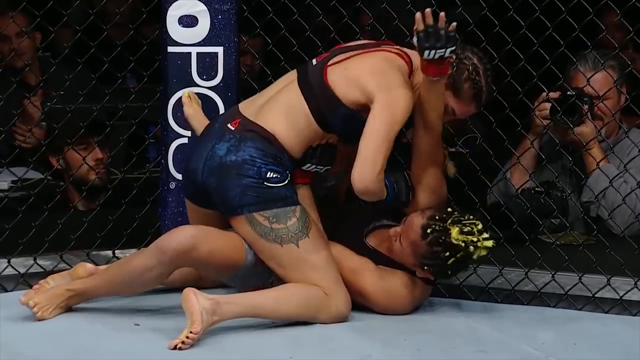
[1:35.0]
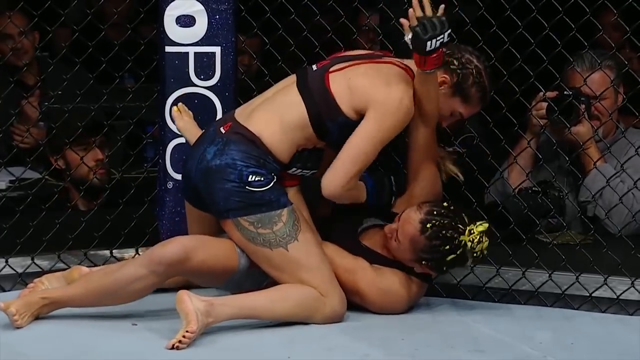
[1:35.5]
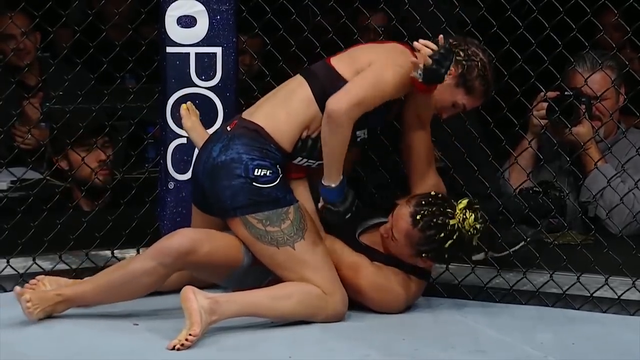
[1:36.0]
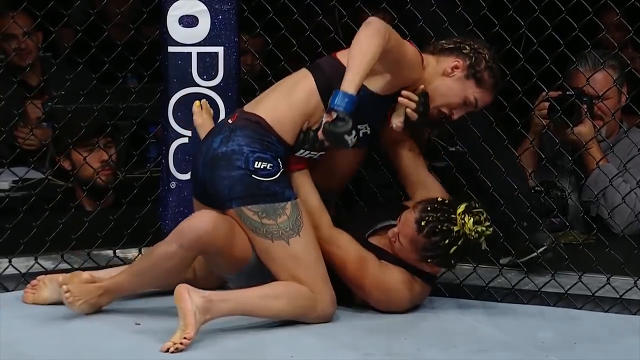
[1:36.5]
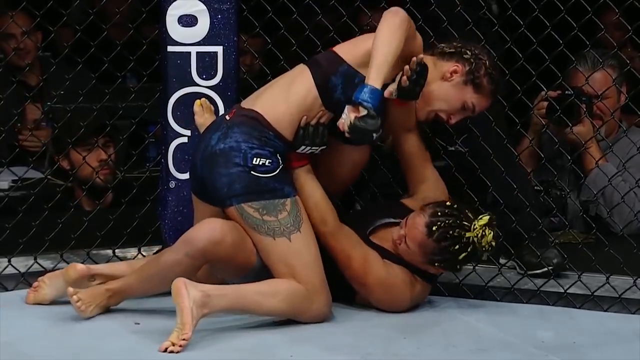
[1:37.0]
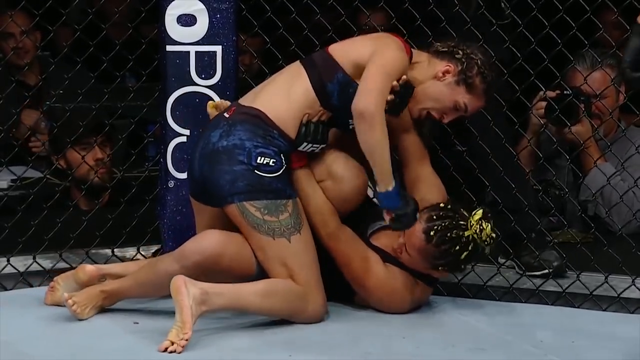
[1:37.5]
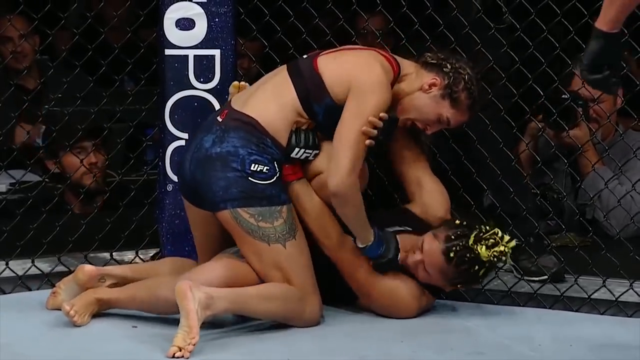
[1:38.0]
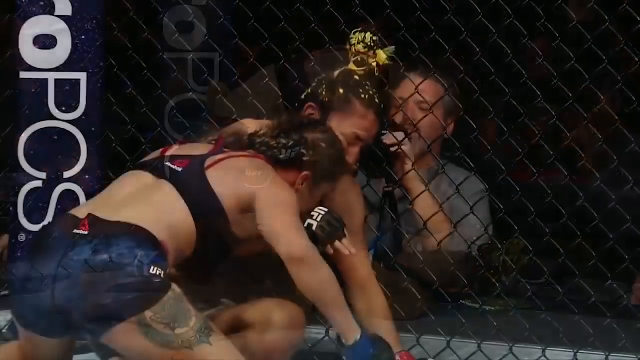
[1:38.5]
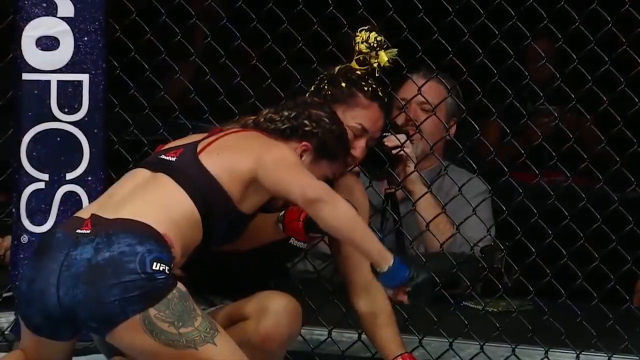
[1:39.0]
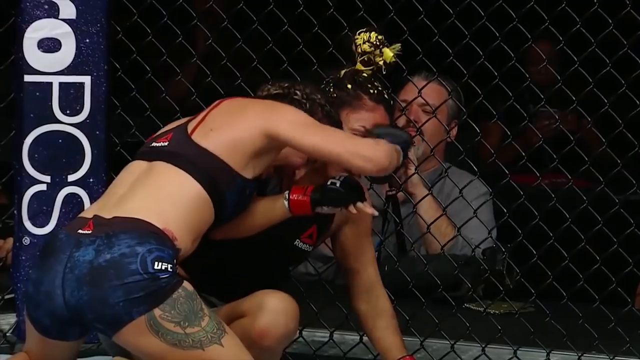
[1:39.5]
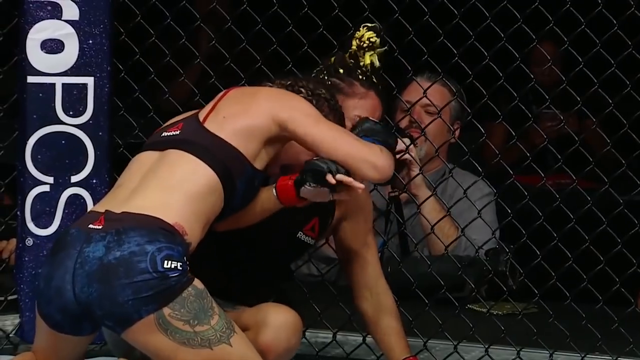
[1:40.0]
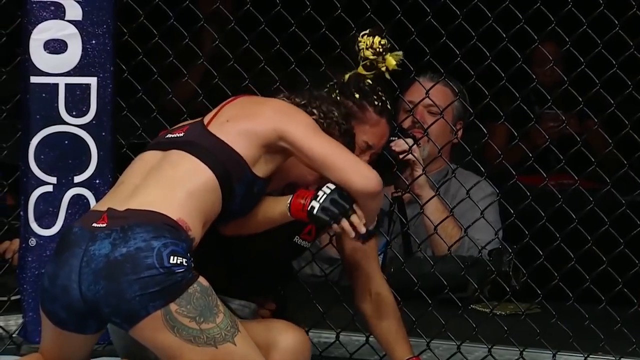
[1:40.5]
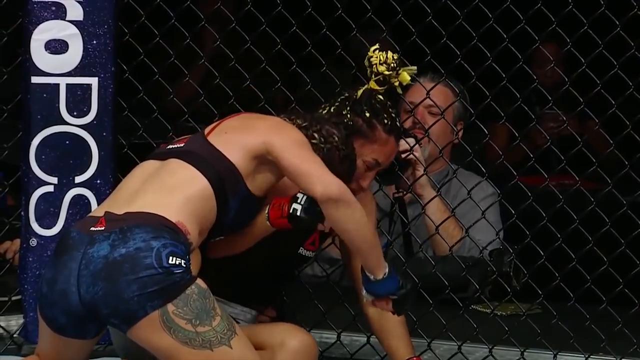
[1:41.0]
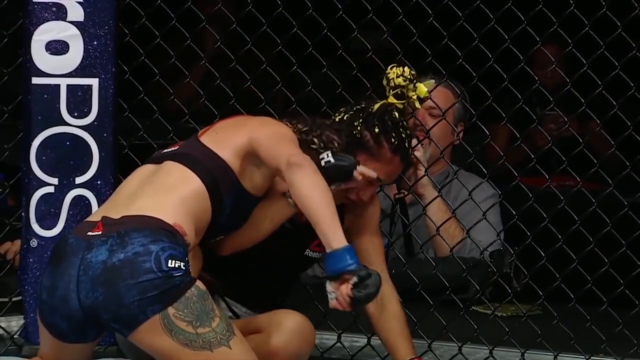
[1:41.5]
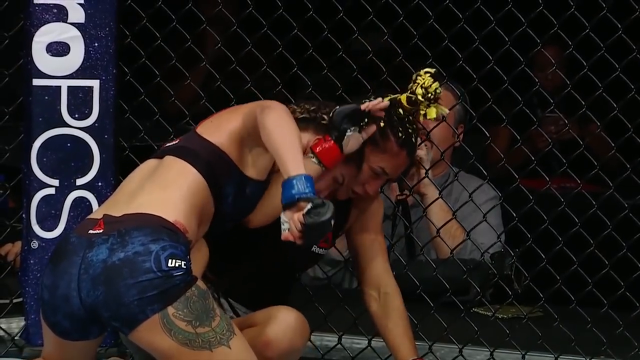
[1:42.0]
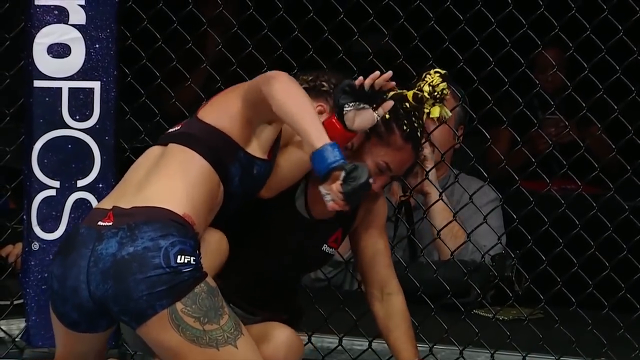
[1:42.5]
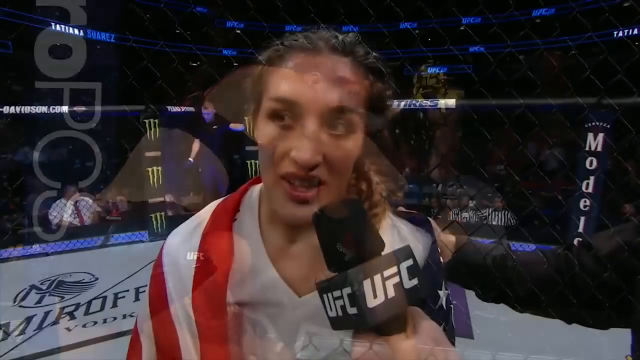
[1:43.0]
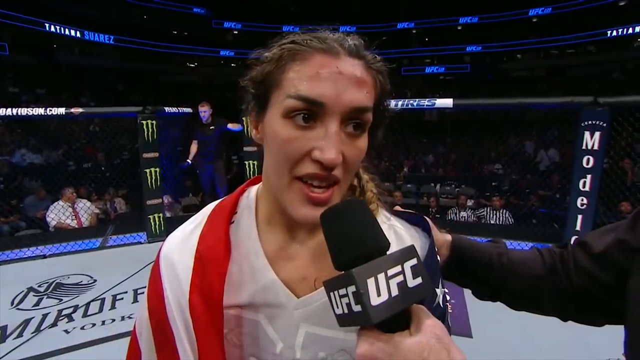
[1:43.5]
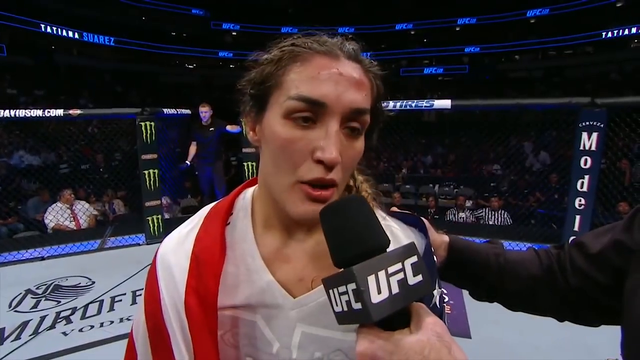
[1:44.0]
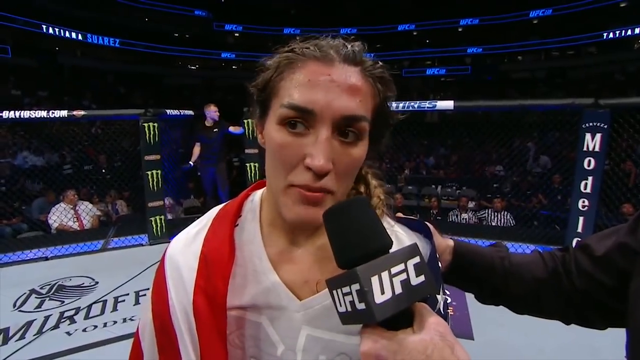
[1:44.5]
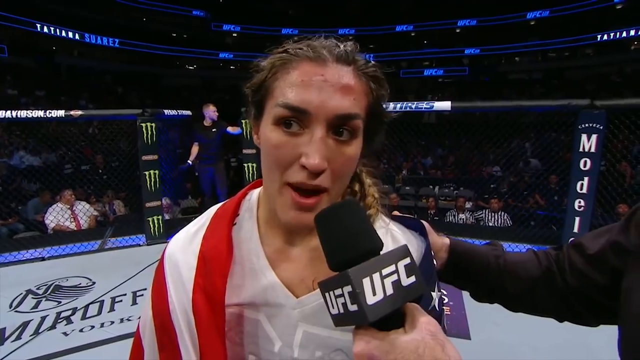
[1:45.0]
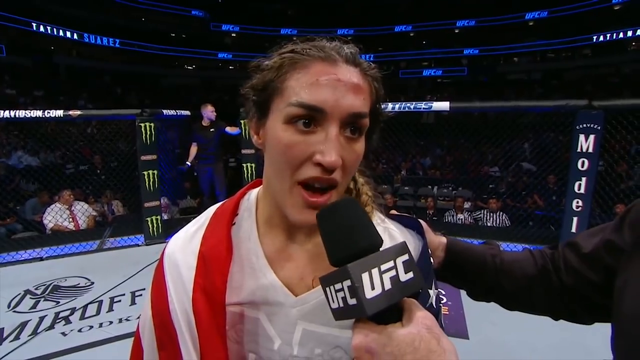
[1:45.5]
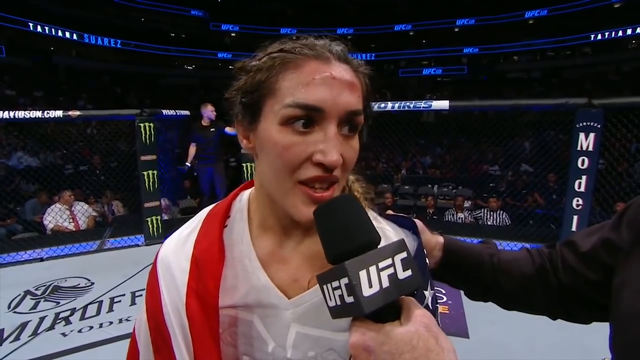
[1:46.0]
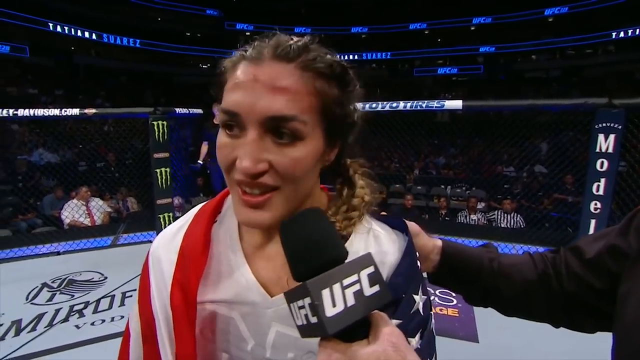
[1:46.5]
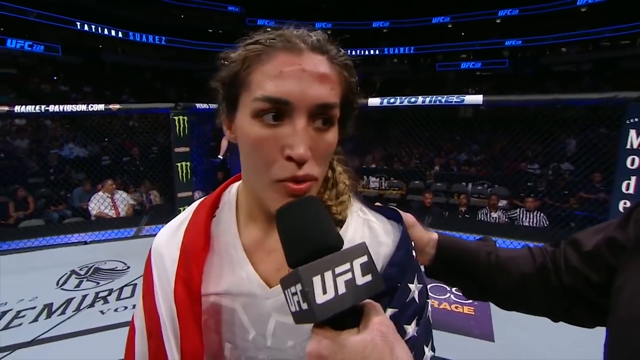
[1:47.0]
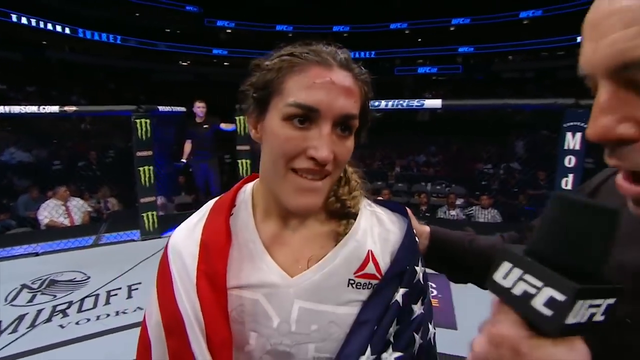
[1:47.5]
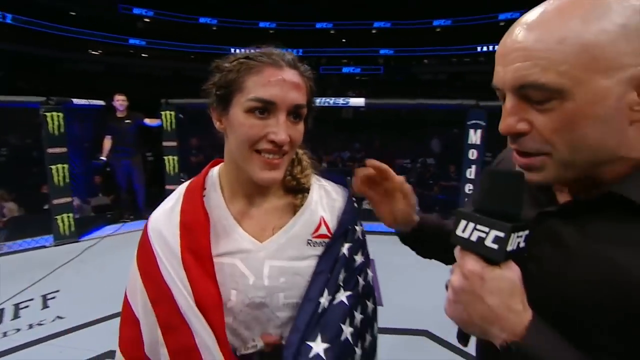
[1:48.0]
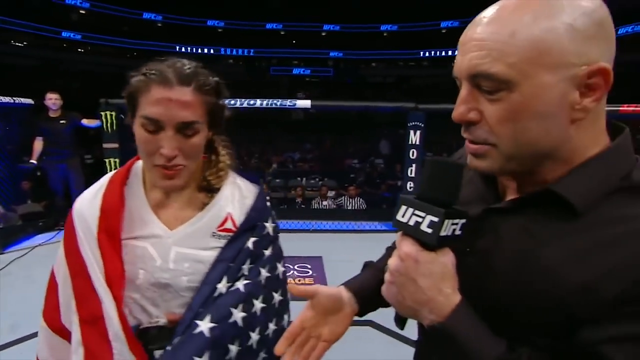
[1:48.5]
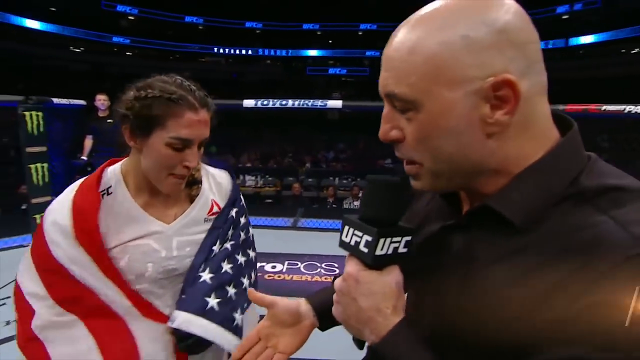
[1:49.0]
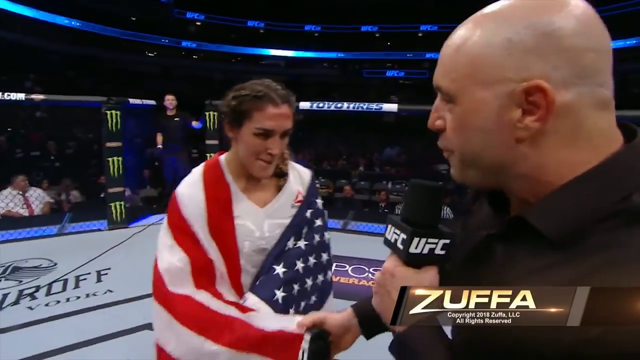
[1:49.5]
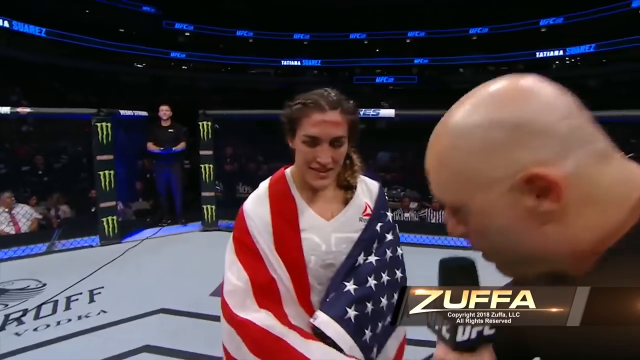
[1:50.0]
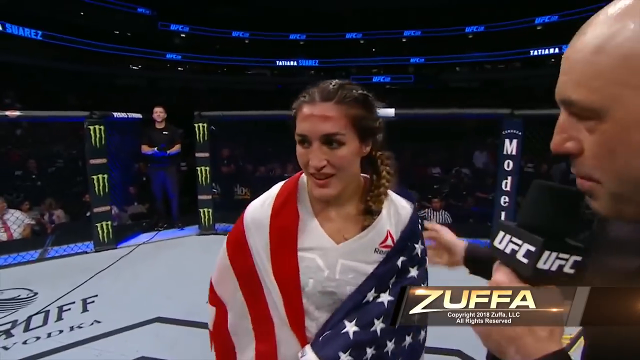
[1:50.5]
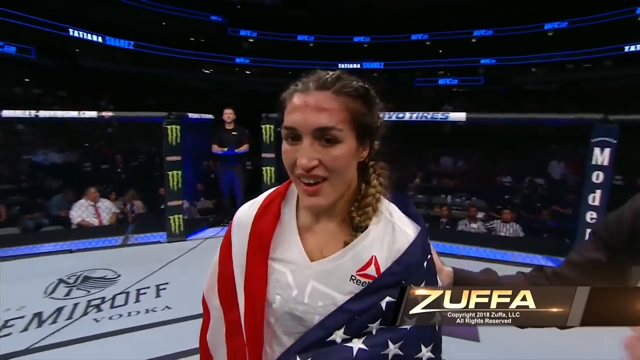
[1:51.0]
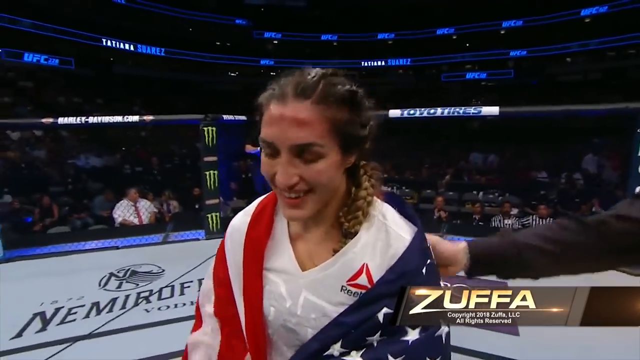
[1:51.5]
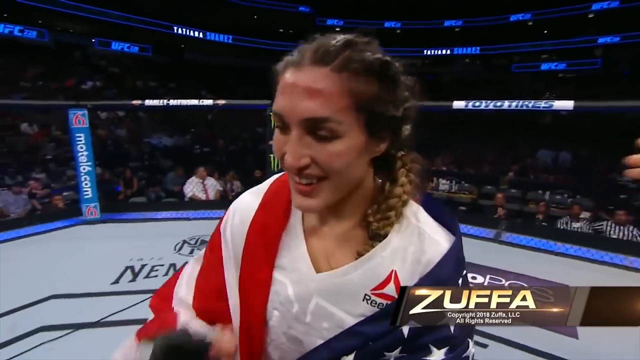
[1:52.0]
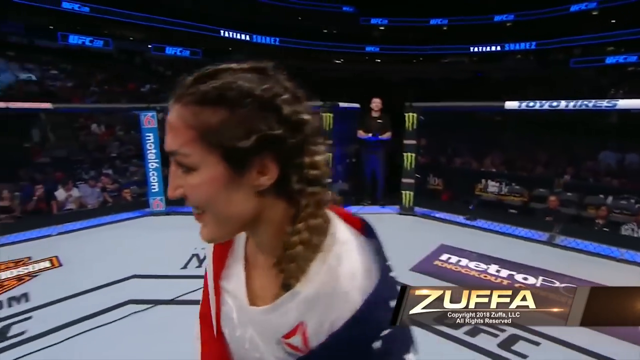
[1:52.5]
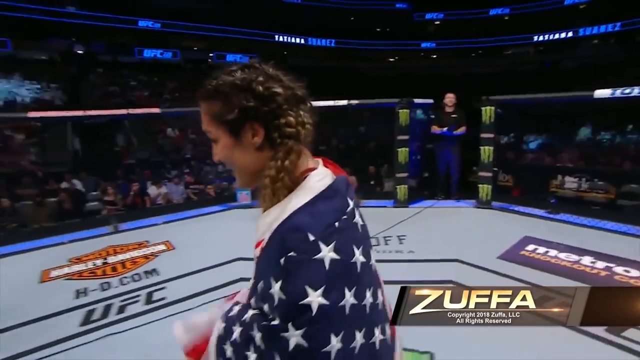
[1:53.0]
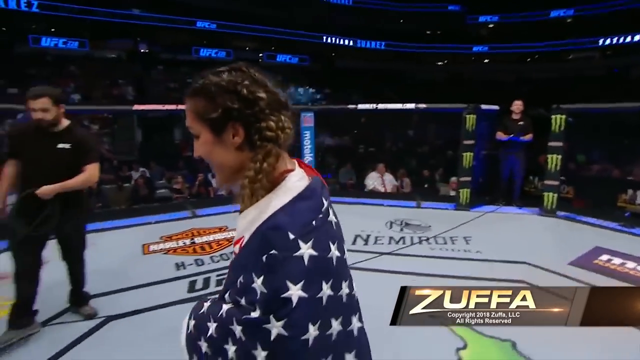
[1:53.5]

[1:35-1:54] The slow-motion replay continues as the woman on top punches the woman on the ground with something like a right hook to the head. There are two slow-motion replay shots of the woman on the ground being punched by the winner, who is kind of on top of her. After the replay, the video returns to the announcer, who shakes the woman's hand and bows to her. "Zuffa" appears in the bottom right corner.